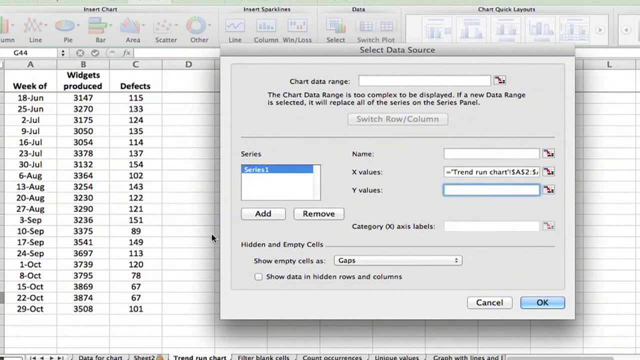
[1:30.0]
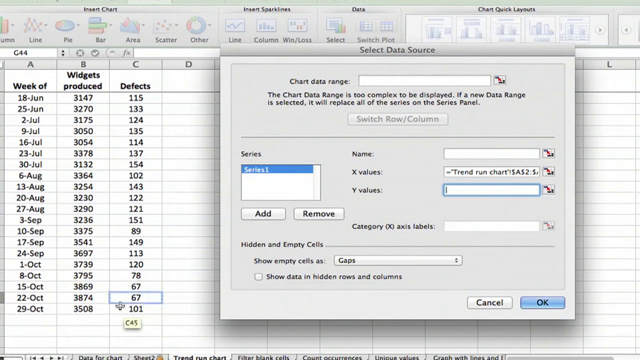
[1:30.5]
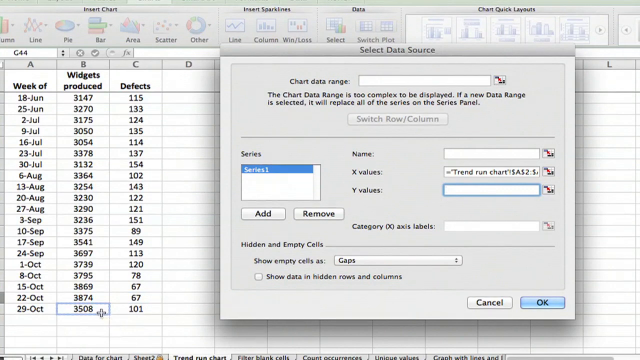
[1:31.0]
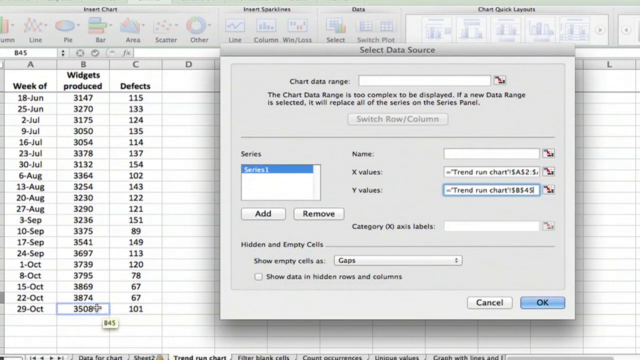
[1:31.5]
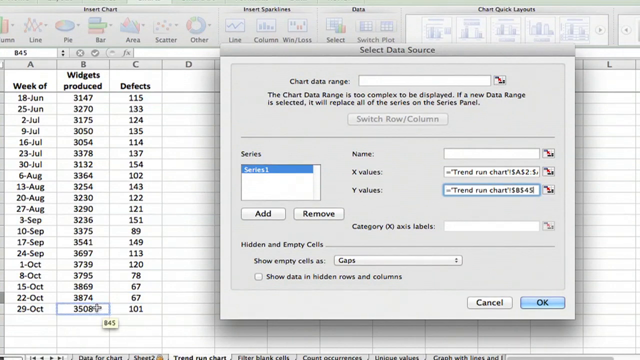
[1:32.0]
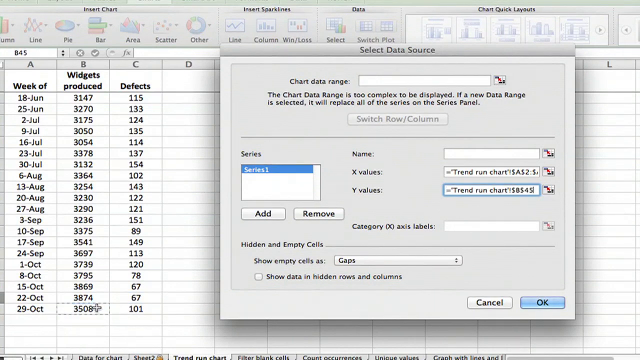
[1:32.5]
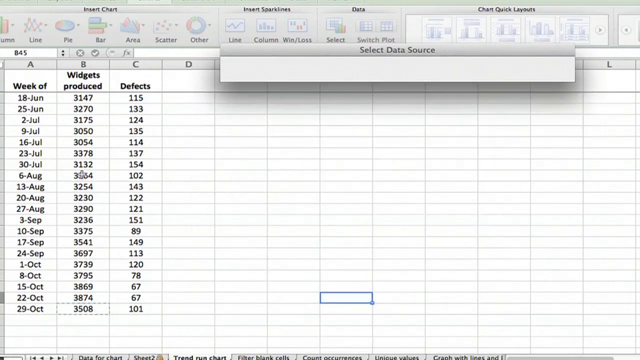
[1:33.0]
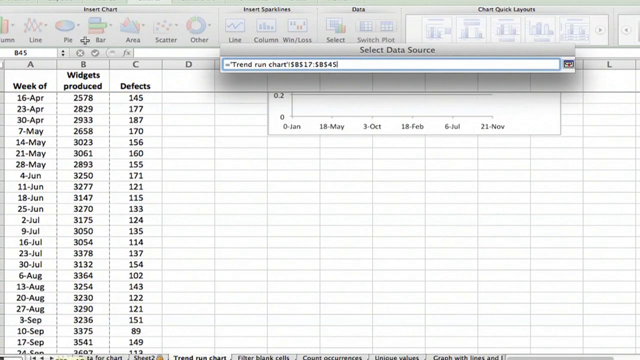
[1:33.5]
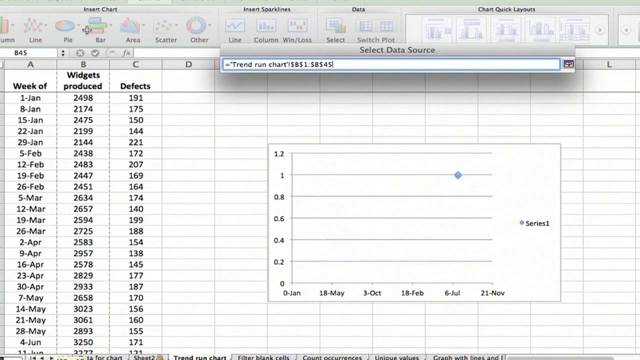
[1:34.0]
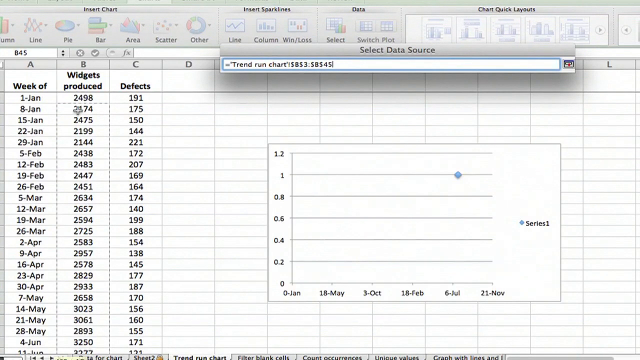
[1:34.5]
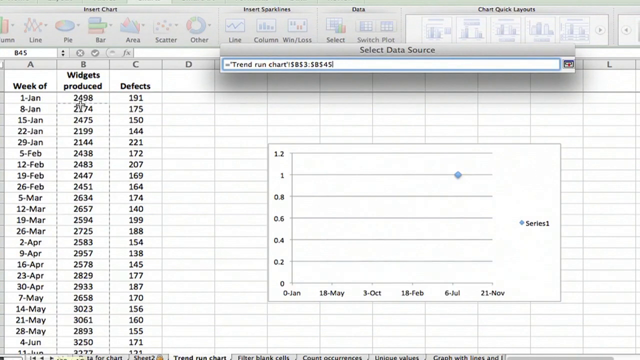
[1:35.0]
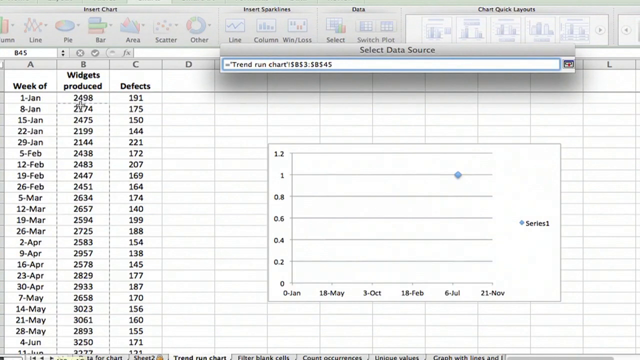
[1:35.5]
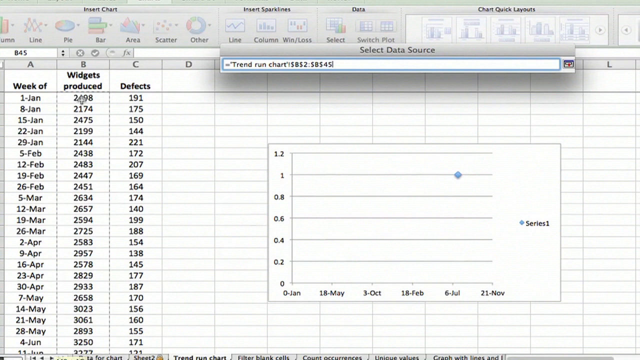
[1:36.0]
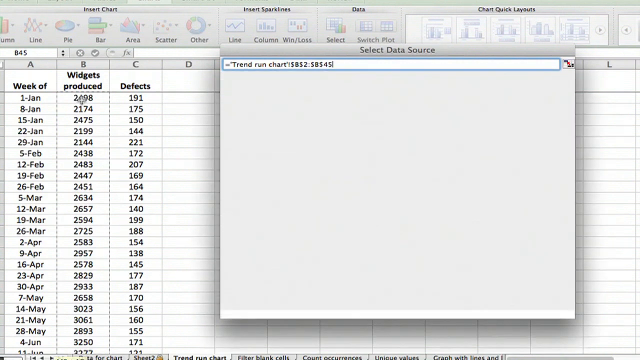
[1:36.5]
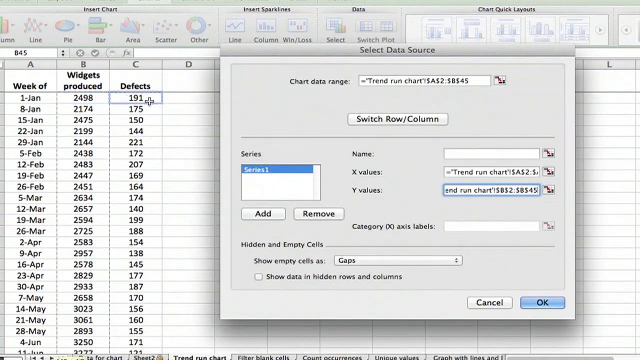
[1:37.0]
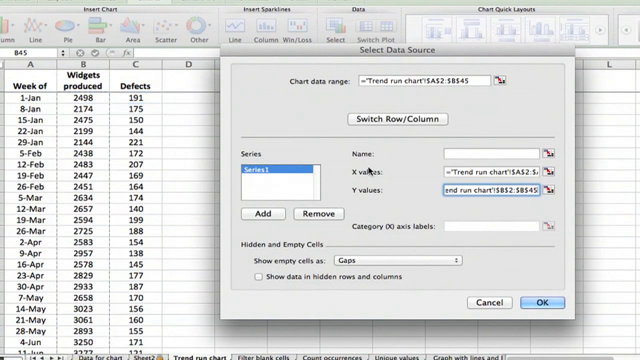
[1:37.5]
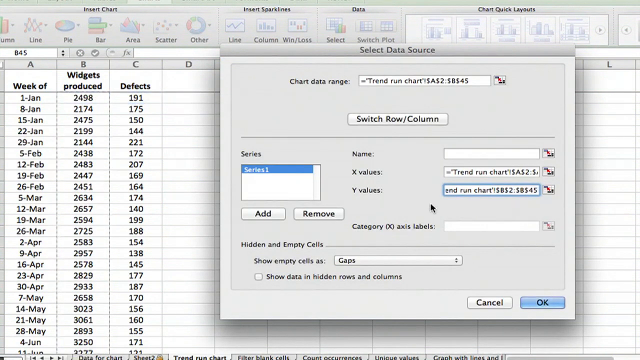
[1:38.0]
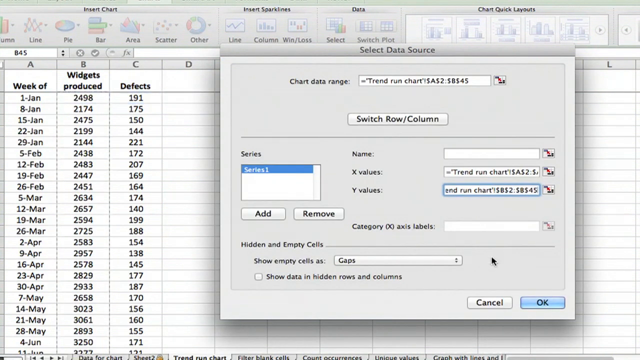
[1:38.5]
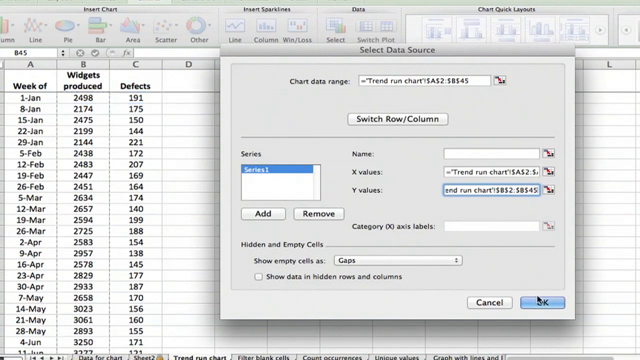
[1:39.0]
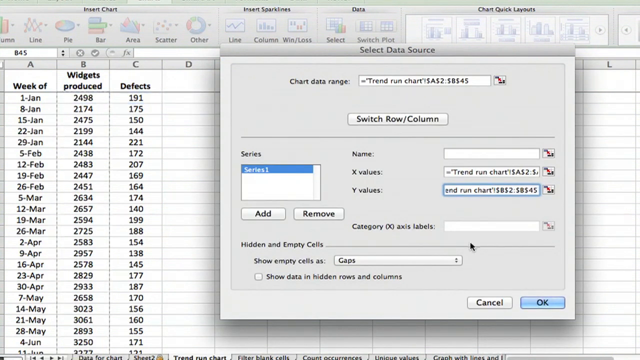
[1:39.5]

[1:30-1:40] An Excel document with three columns of data, Week of, Widgets Produced and Defects, is in focus. The user is selecting chart points for a marked scatter chart. The user selects the data in the Y value section of the chart settings and deletes it, then selects the Widgets Produced column data from the bottom cell, B45, up to the first data cell, B2.